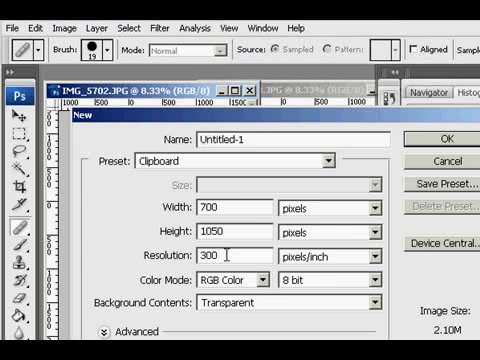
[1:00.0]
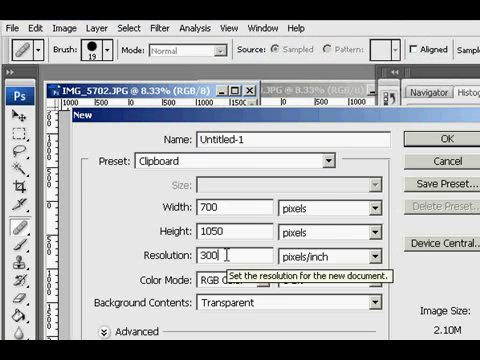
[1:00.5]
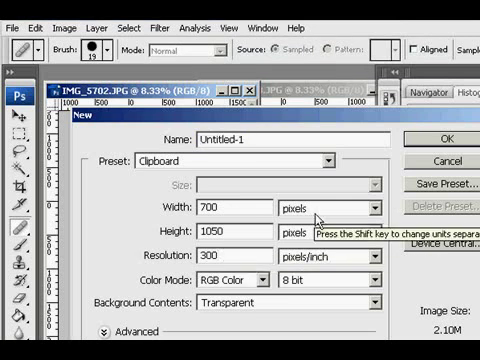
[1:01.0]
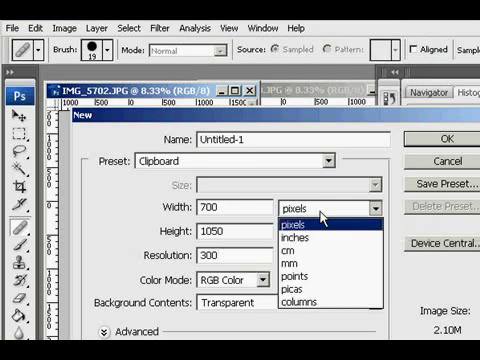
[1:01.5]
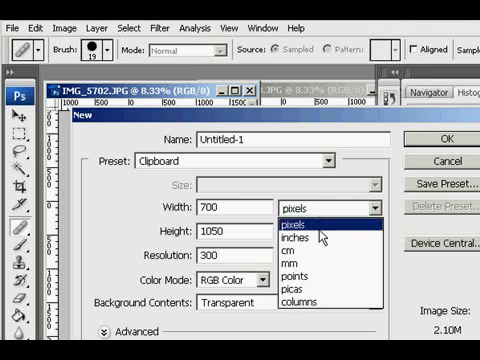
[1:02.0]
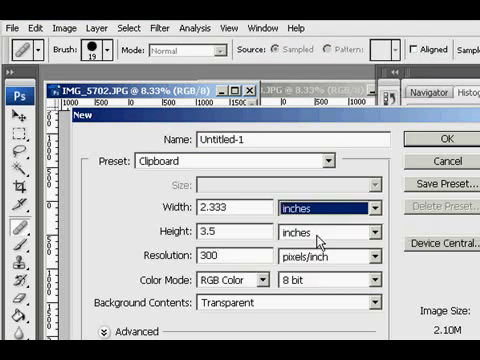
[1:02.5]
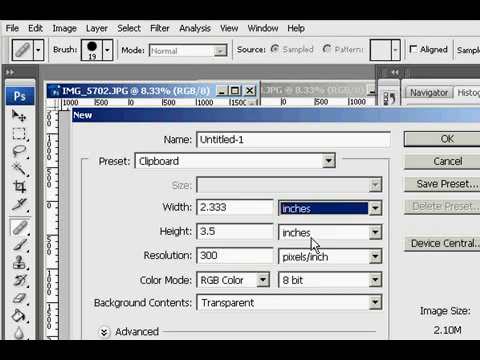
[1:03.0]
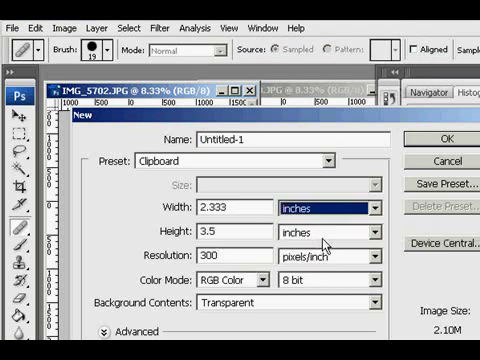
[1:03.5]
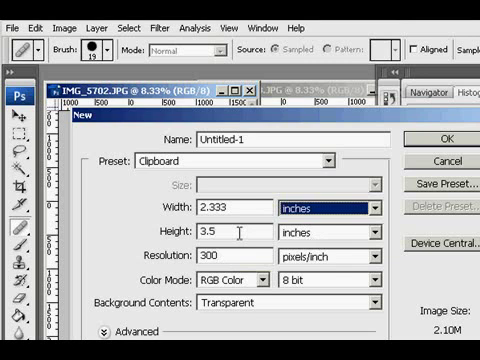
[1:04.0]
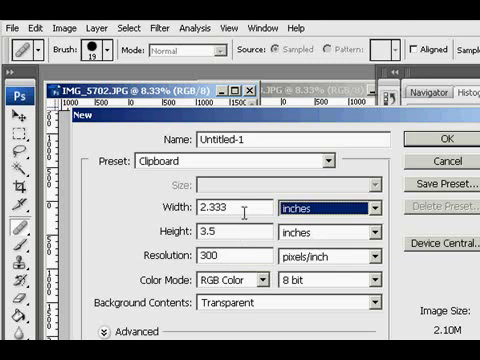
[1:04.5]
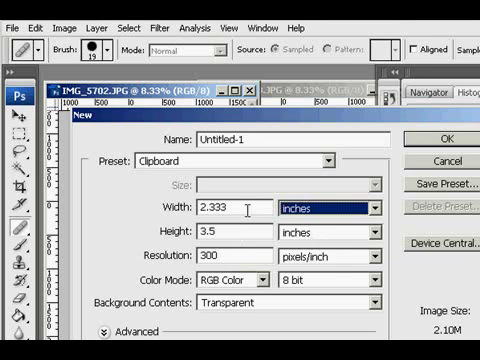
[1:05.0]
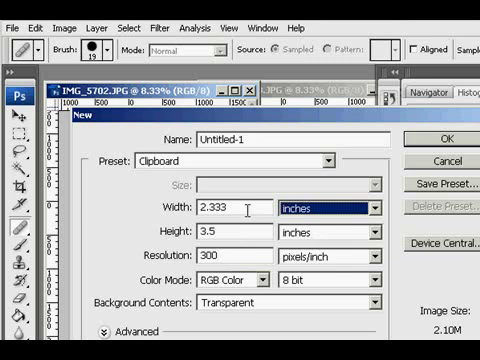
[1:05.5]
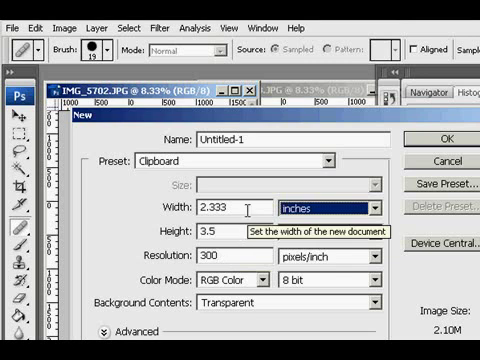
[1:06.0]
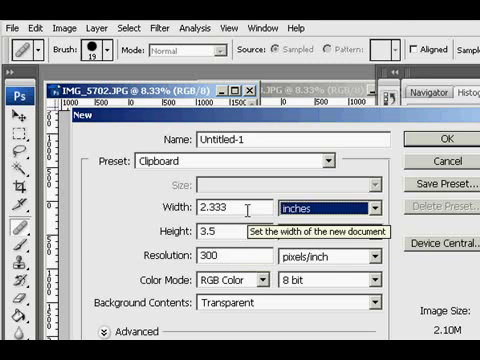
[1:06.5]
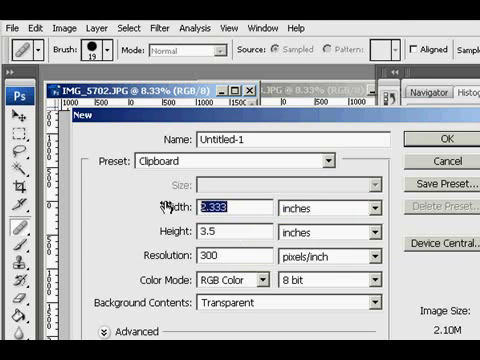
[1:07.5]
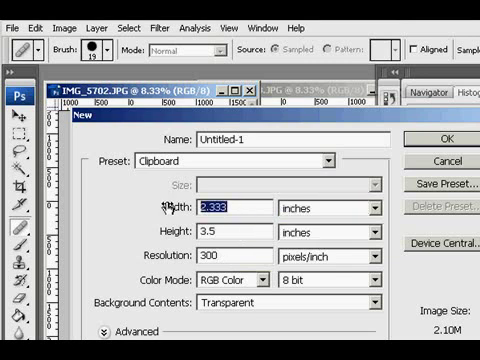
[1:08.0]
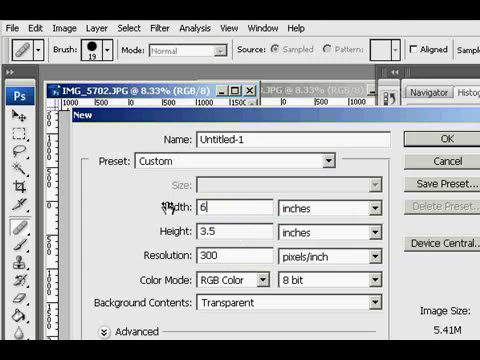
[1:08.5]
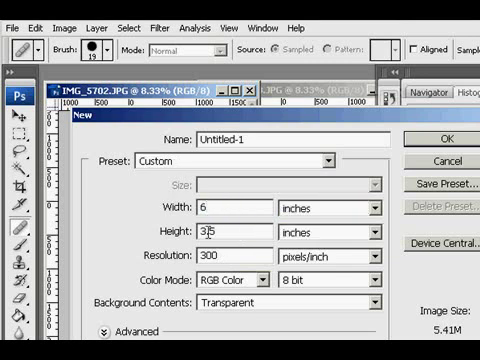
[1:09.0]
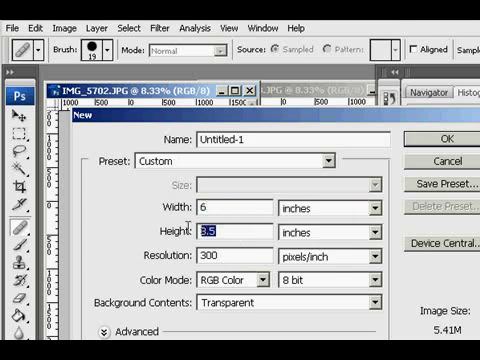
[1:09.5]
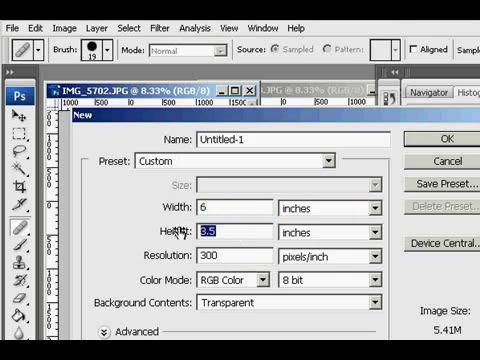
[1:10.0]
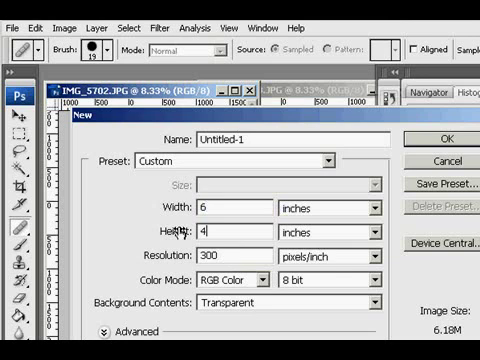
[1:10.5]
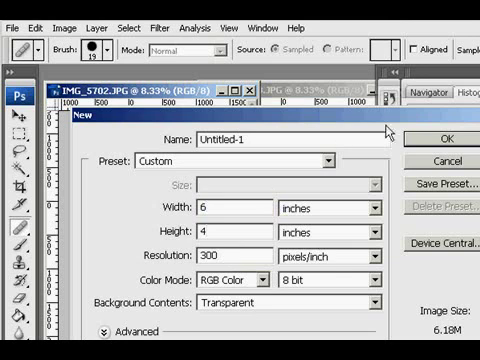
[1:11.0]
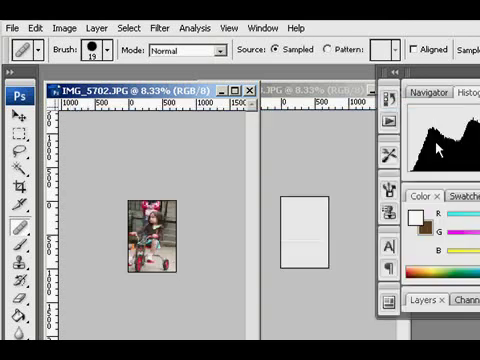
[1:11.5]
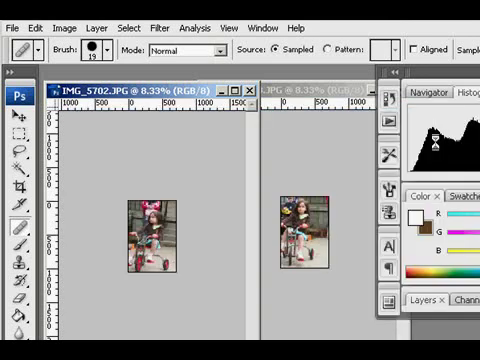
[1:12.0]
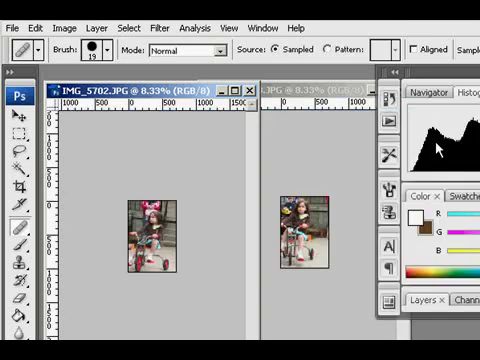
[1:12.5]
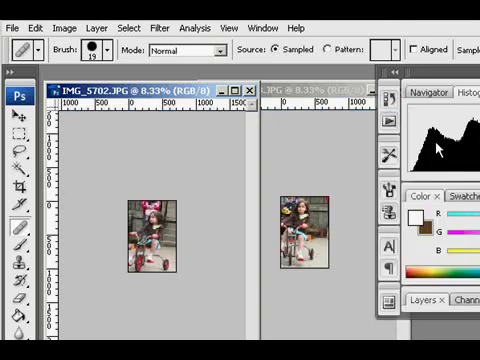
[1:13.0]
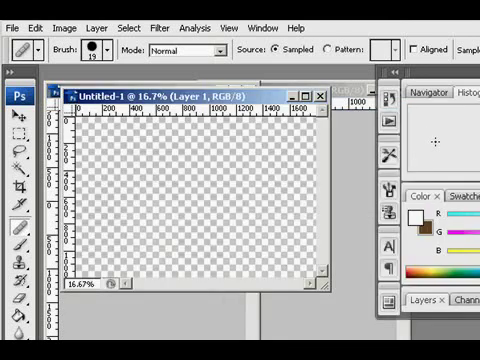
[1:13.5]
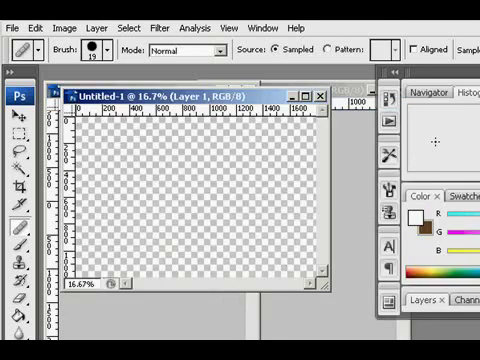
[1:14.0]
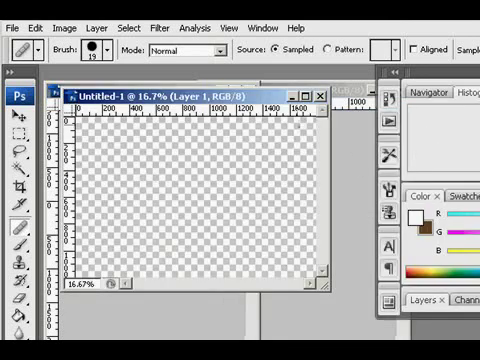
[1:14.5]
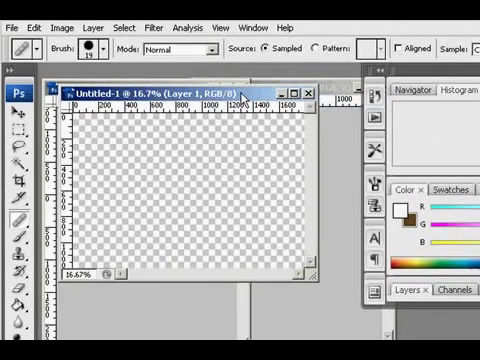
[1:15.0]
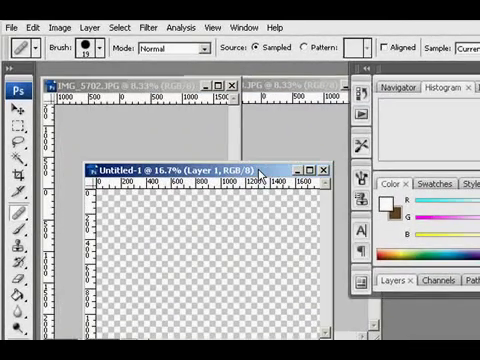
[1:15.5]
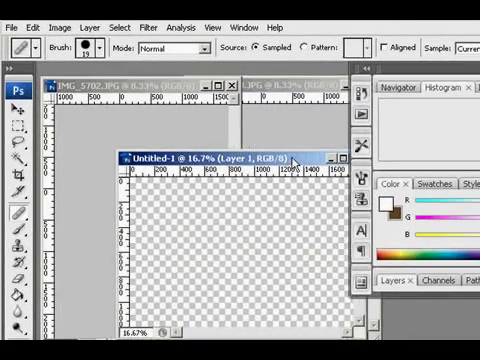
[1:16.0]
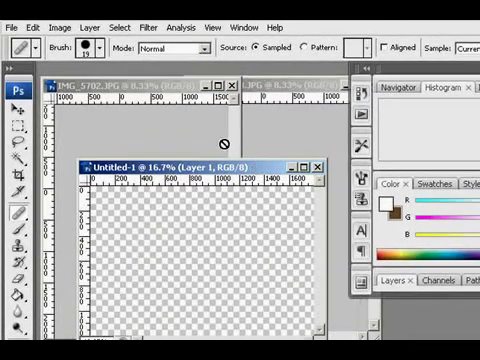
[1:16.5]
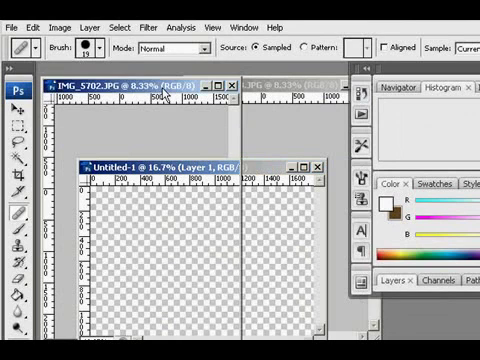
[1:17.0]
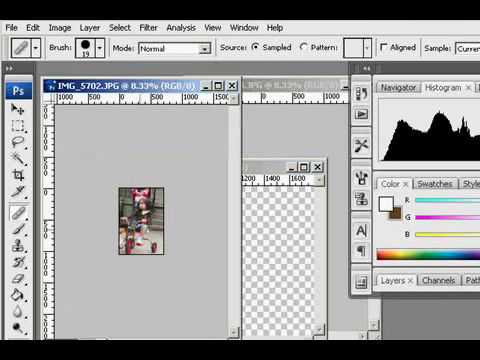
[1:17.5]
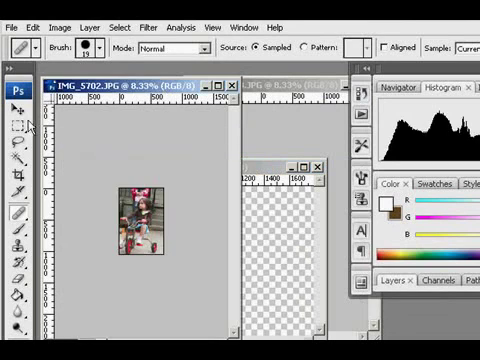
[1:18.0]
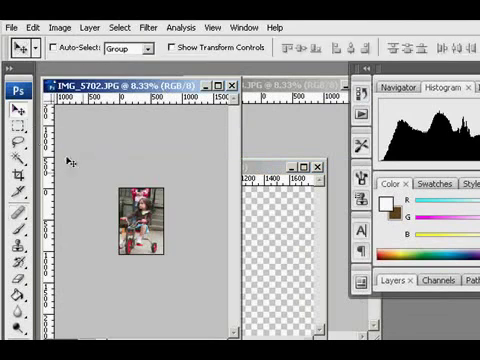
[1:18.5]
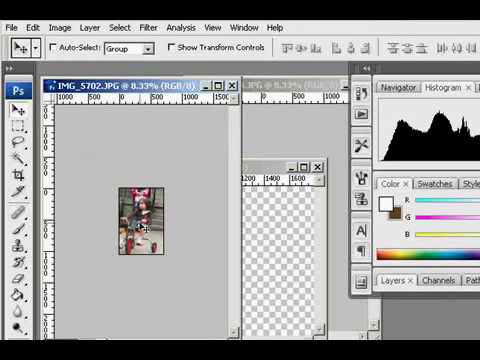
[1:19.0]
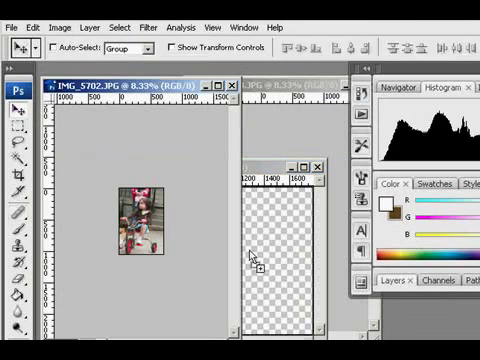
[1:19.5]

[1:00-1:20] A new image menu is on screen. The user changes the width units to inches; the width is 2.333 inches and the height 3.5 inches, and these are changed to a larger 6 inches wide and 4 inches high. OK is clicked, and the user then layers the image. On the second photo the width units are also switched to inches, and the width and height are again set to 6 and 4, matching the previous image.